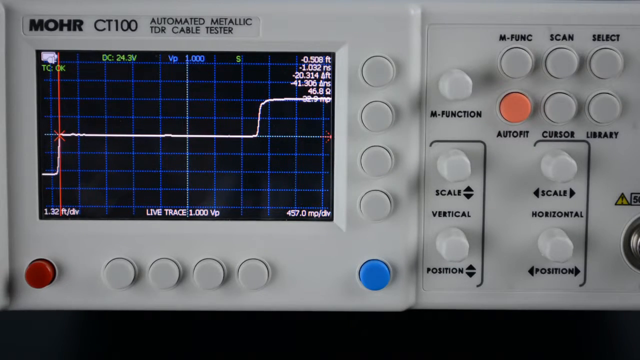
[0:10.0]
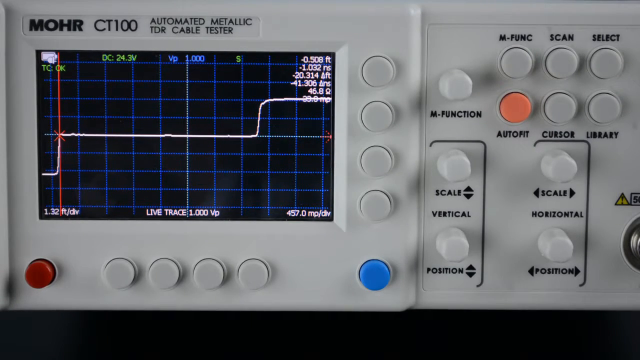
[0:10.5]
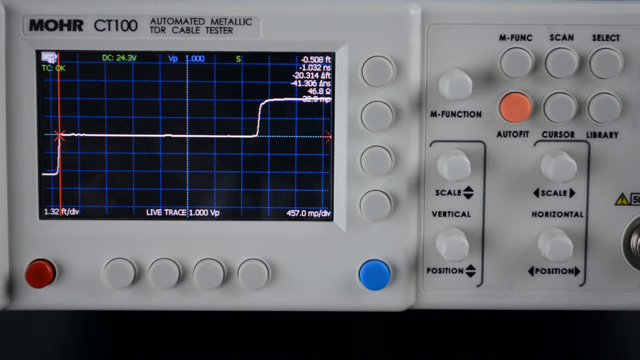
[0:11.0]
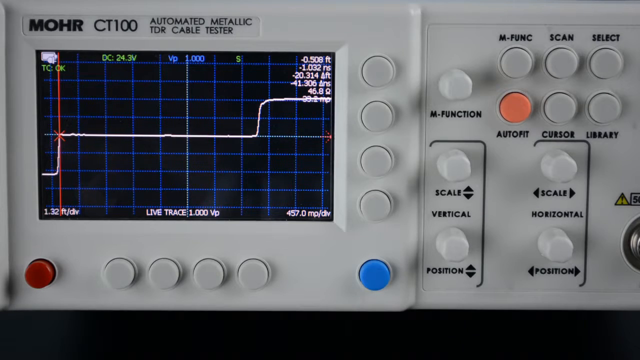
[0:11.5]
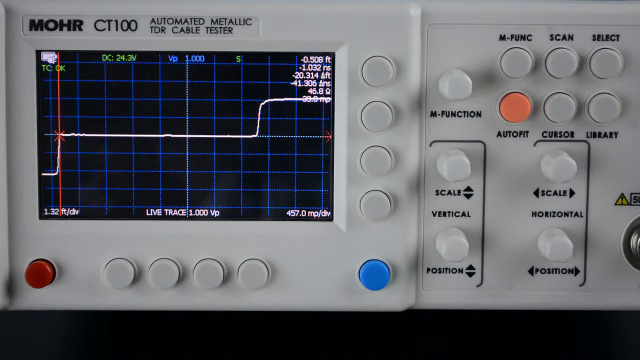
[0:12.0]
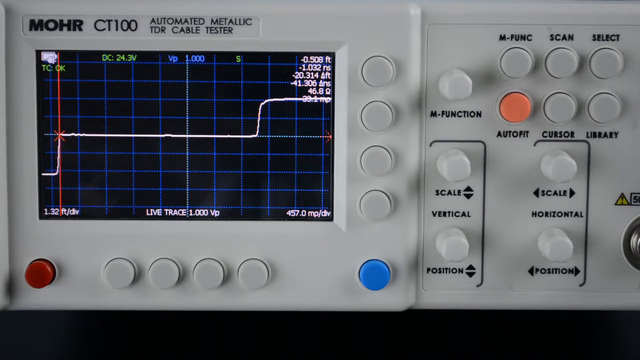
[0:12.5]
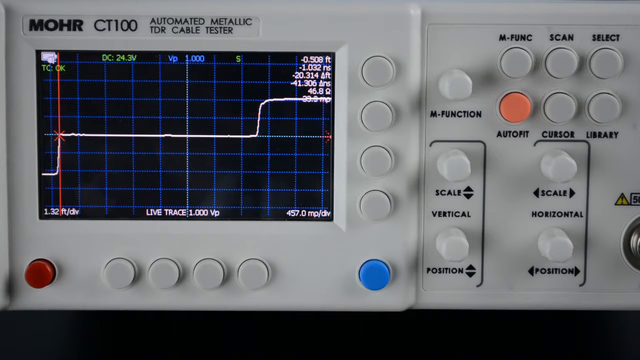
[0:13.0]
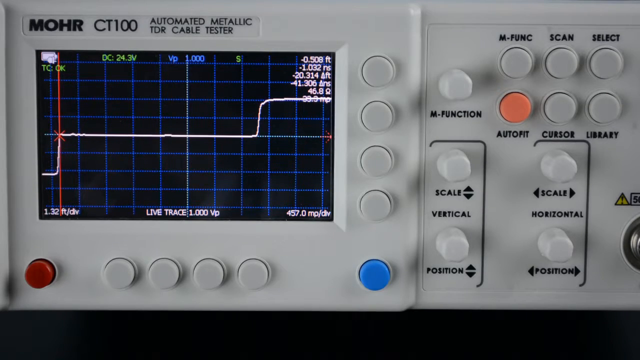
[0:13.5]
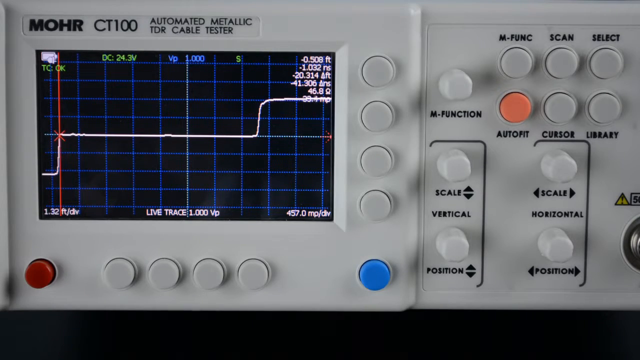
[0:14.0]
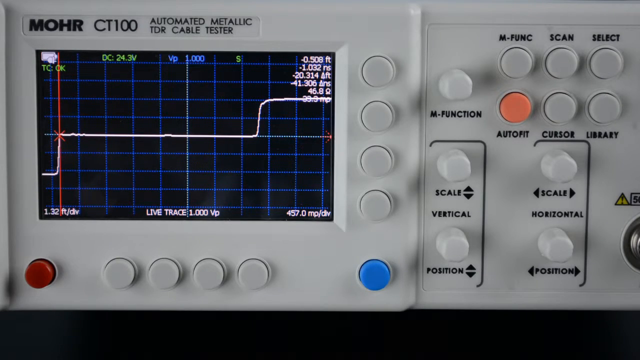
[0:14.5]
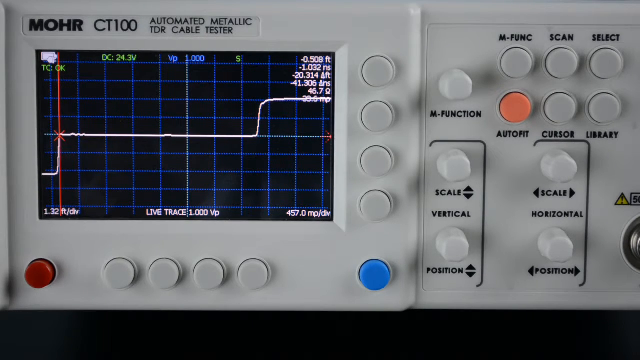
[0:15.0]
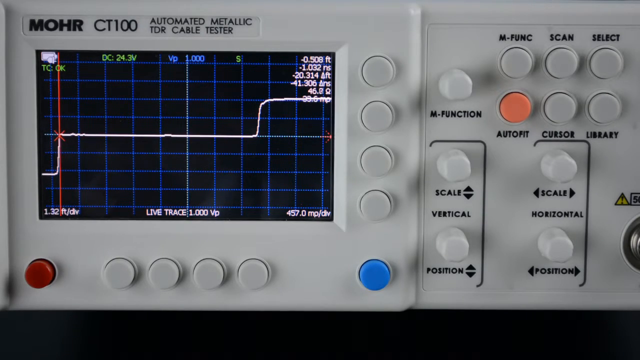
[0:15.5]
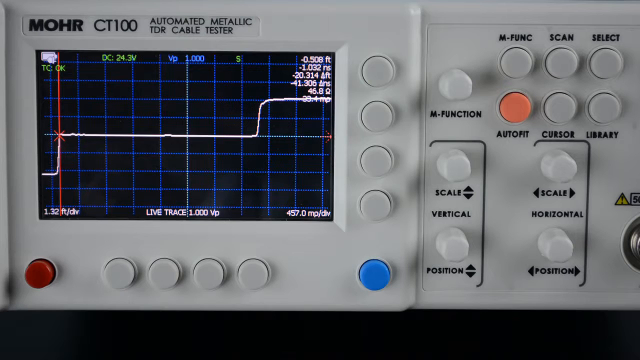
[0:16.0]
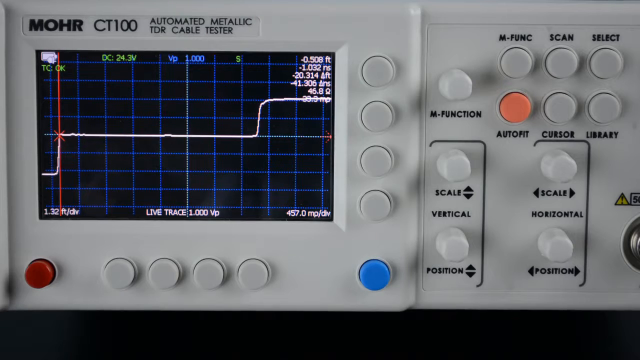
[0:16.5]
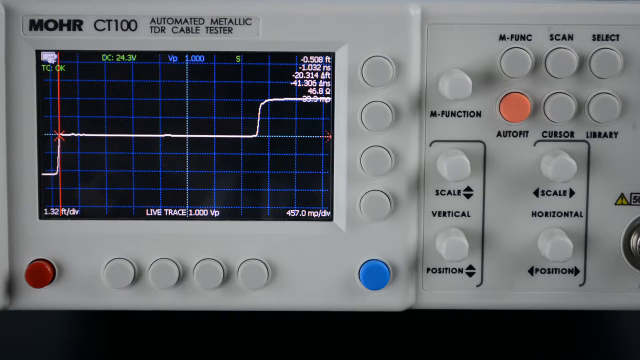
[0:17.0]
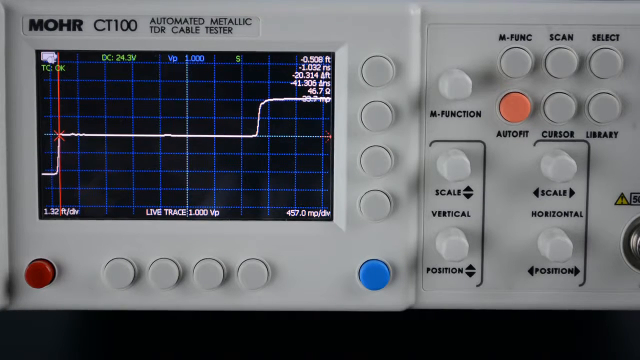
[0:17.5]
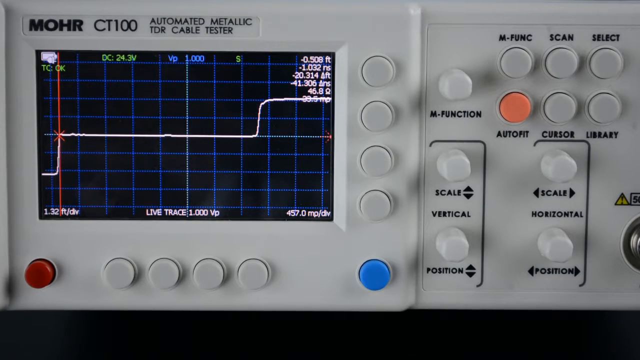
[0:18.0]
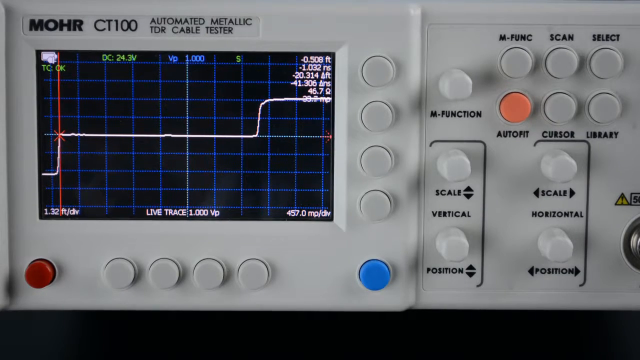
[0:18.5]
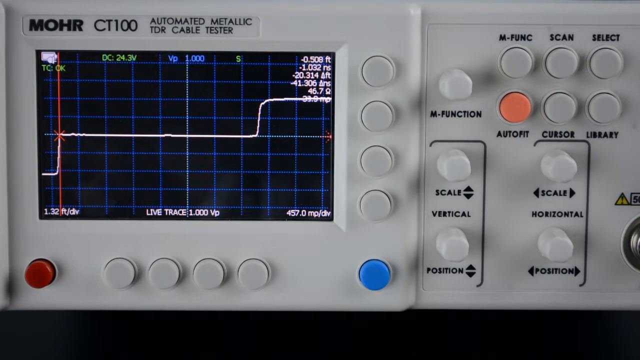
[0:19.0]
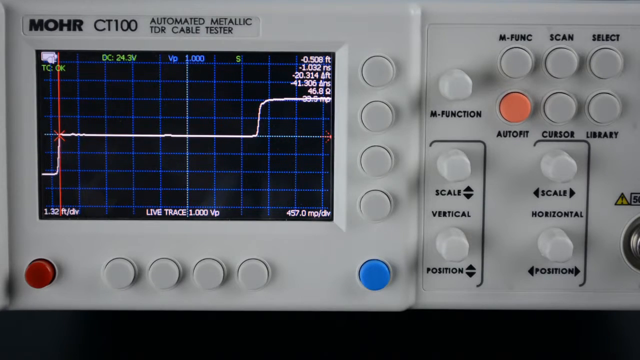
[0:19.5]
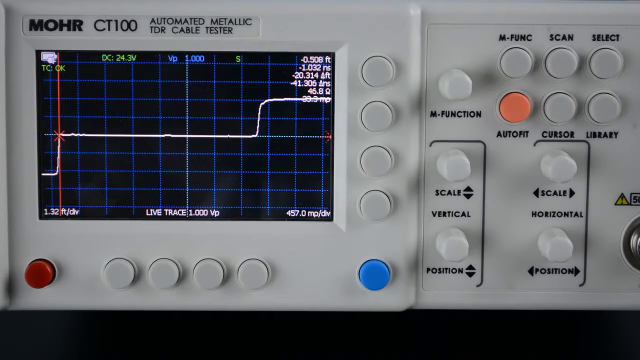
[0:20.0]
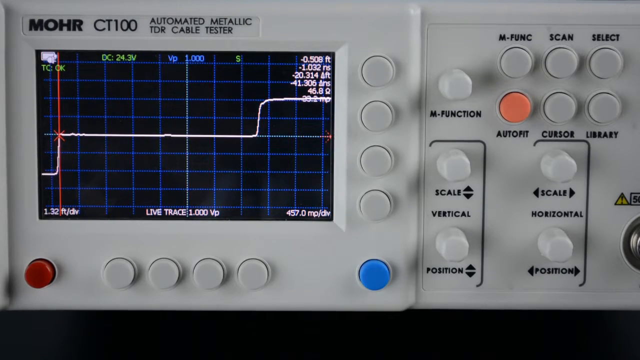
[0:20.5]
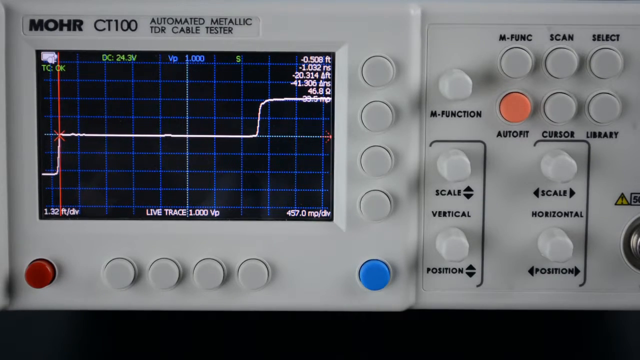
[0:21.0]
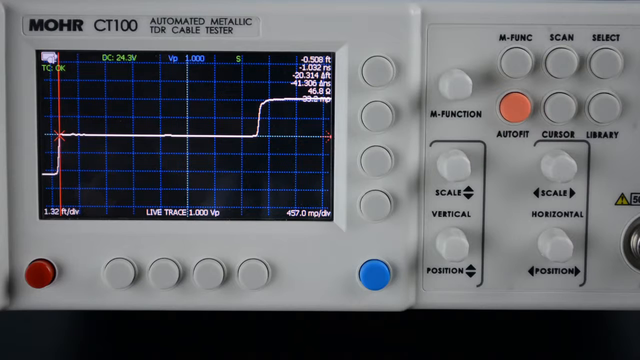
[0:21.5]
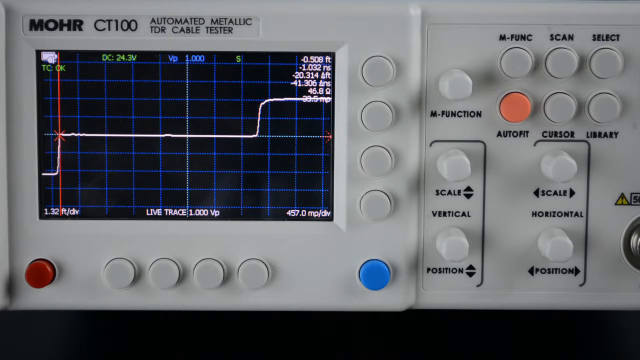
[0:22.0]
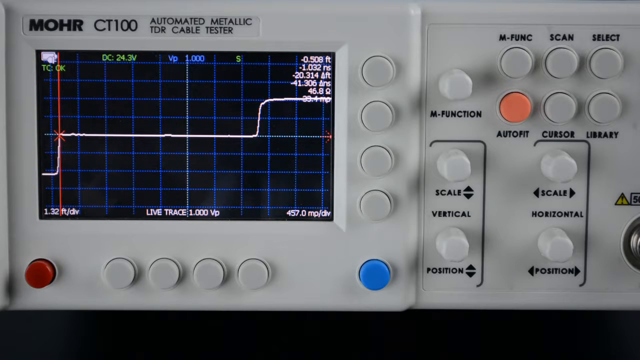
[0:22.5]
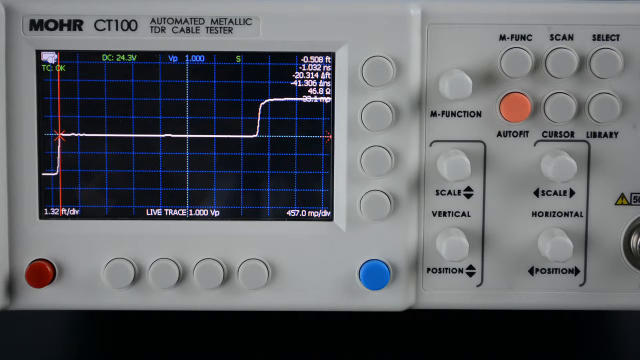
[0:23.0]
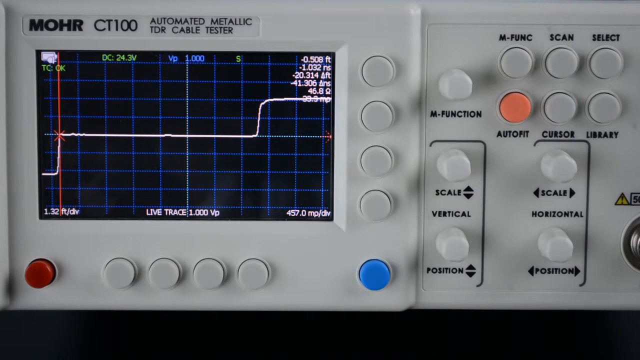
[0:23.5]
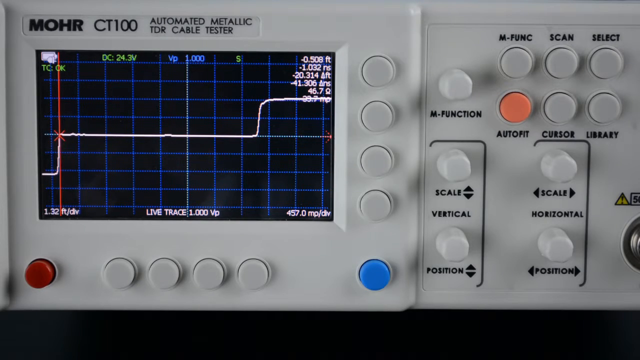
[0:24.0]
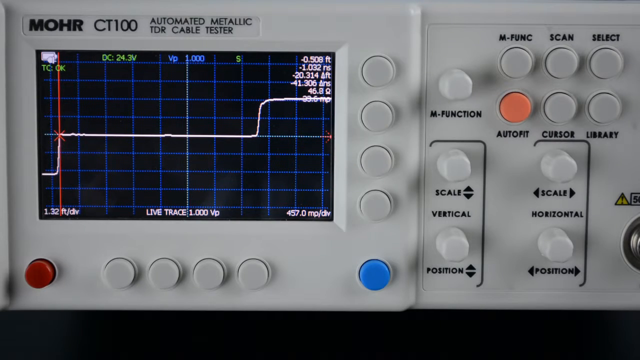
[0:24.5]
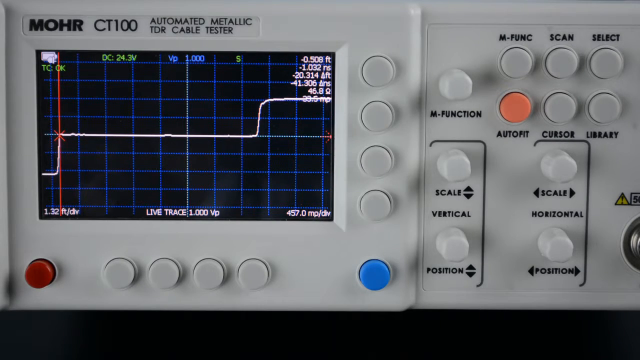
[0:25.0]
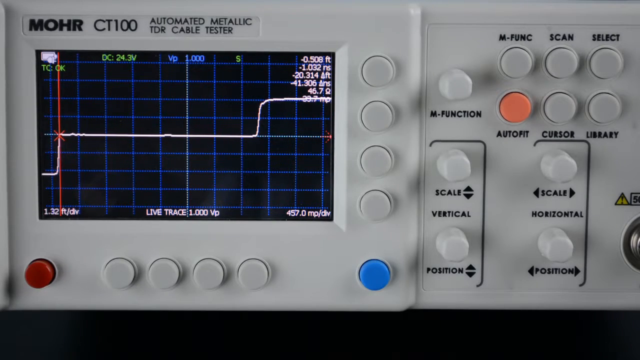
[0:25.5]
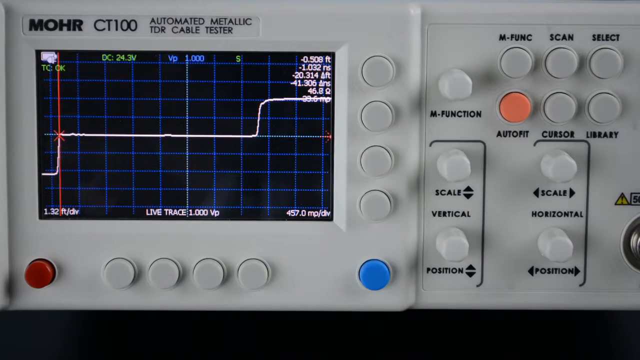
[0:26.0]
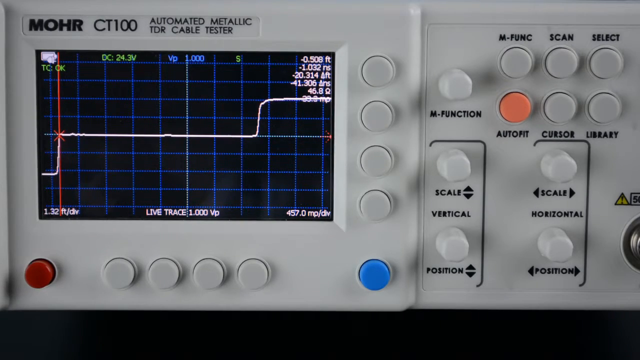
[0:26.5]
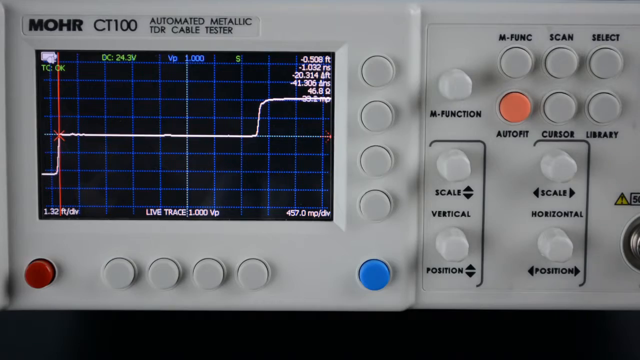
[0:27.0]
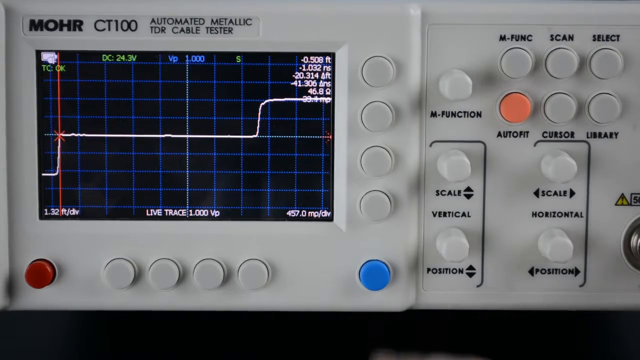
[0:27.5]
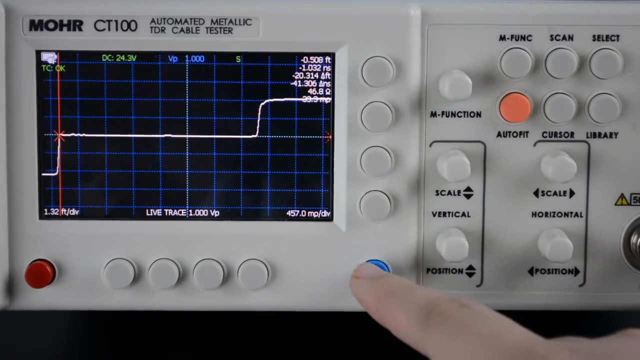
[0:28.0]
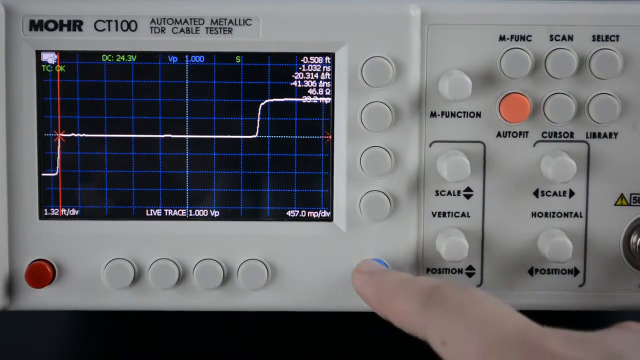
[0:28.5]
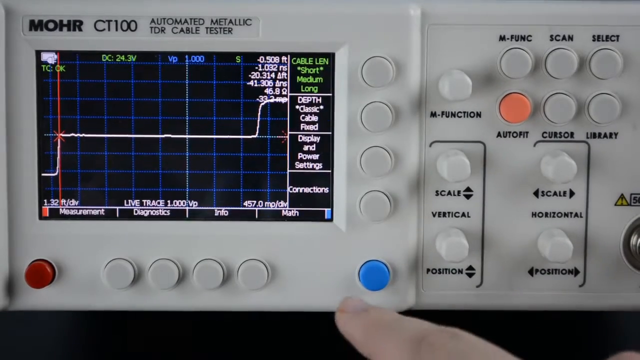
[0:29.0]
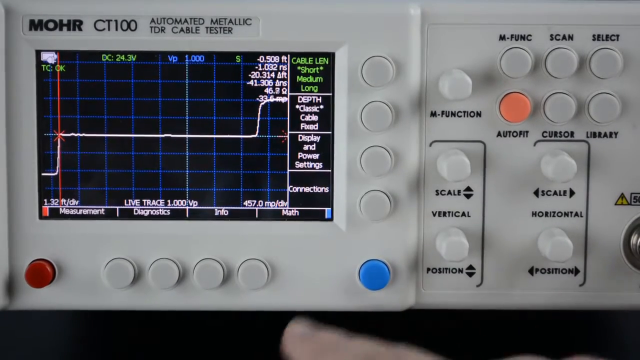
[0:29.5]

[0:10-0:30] The zoomed-in view of the device is static. The device is a MOHR CT100 automated metallic TDR cable tester with a small LCD screen surrounded by buttons. On the right side are more buttons with dials that can be turned left and right. The LCD screen shows a grid with a solid white line that runs horizontally and then bumps up in a small wave at around the 70% position toward the right side of the screen. The only motion is a statistic in the top right-hand corner of the screen; the solid white line runs through it and obscures it, but the number underneath appears to be increasing. At the end, a finger appears and pushes a circular blue button in the bottom right-hand corner of the left half of the device, below the LCD screen. The screen changes to a different view that looks like a summary of a test.